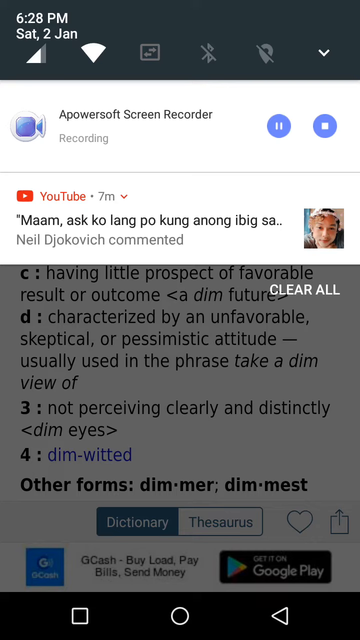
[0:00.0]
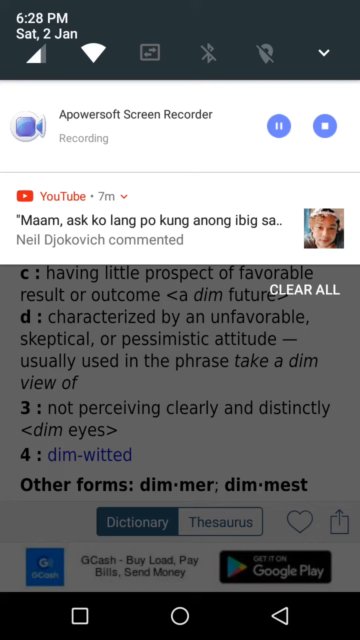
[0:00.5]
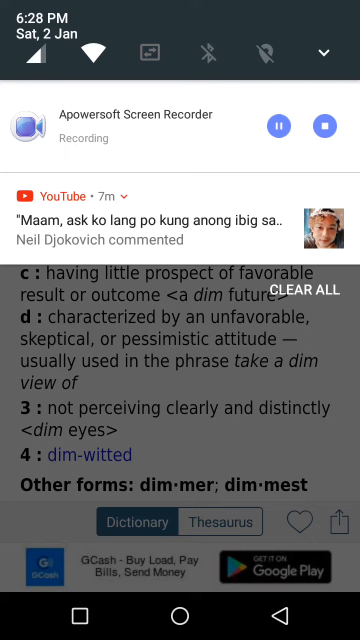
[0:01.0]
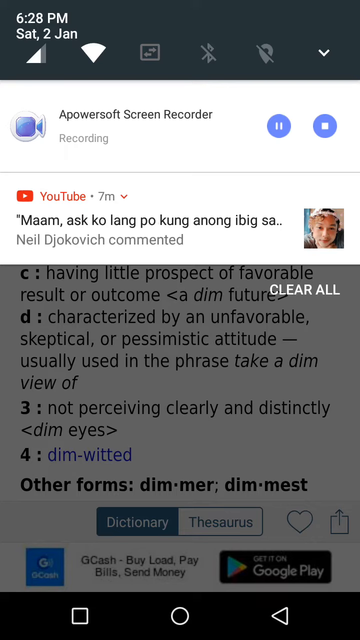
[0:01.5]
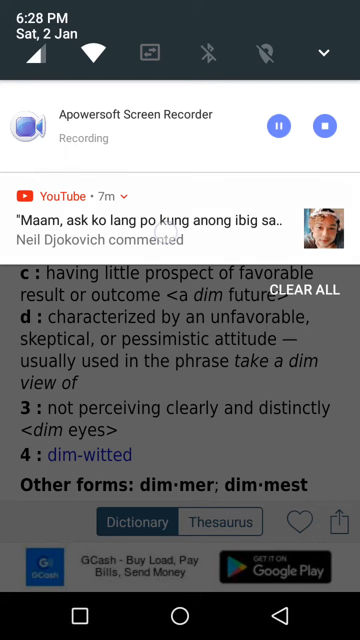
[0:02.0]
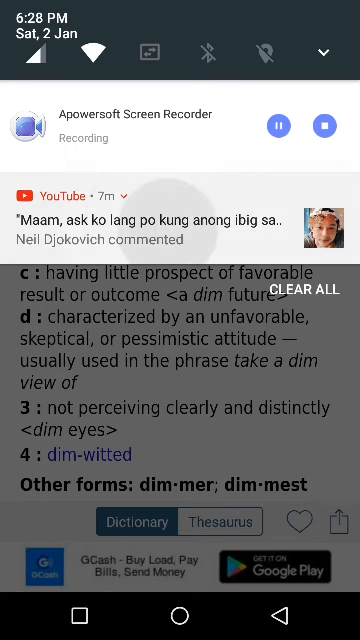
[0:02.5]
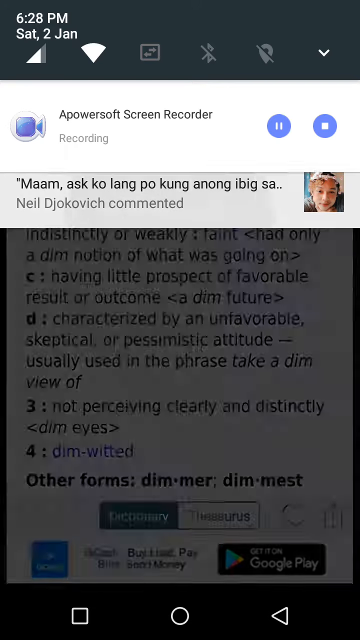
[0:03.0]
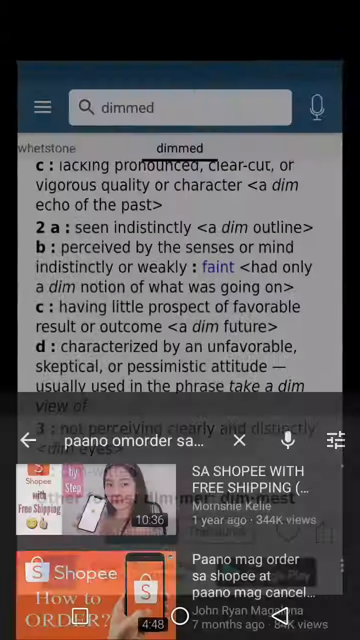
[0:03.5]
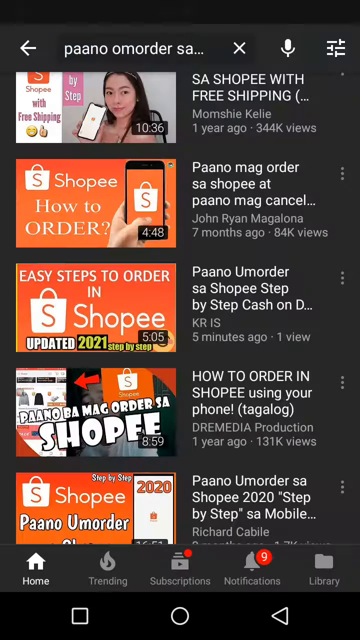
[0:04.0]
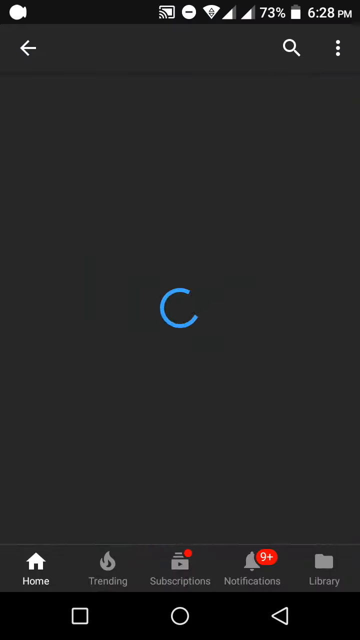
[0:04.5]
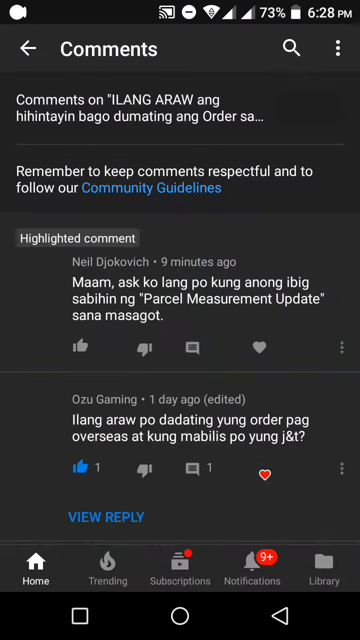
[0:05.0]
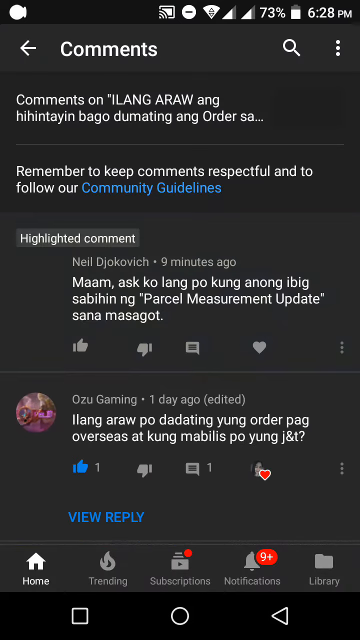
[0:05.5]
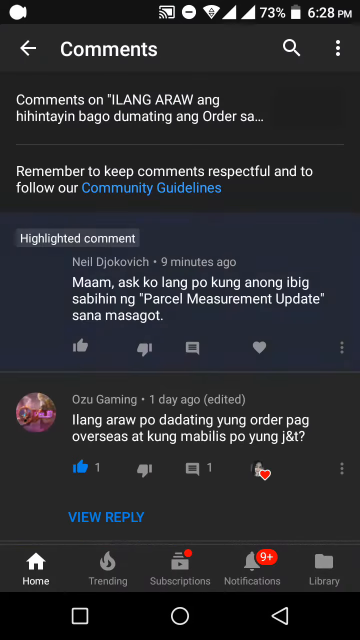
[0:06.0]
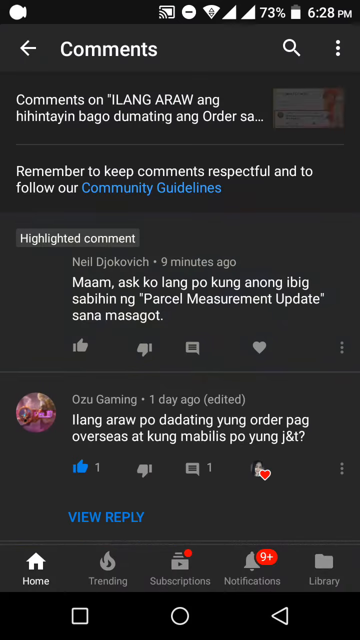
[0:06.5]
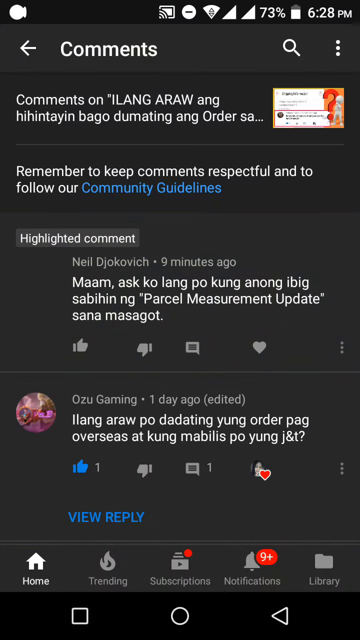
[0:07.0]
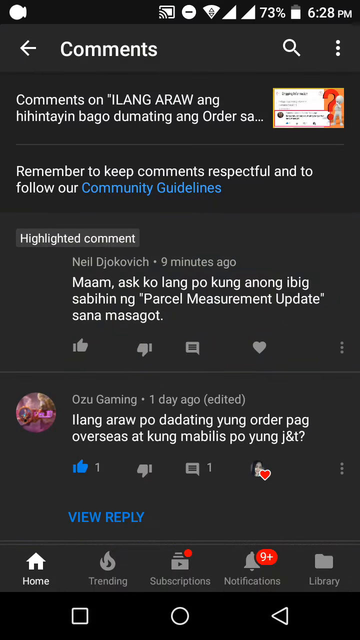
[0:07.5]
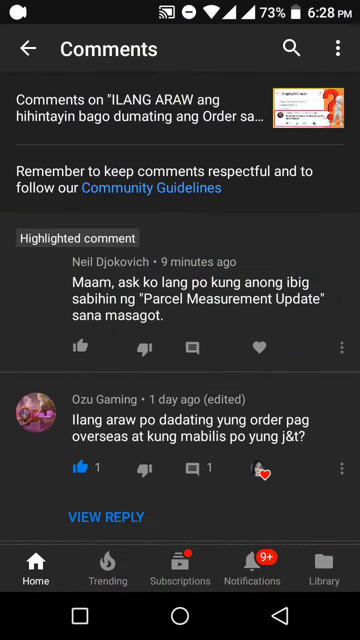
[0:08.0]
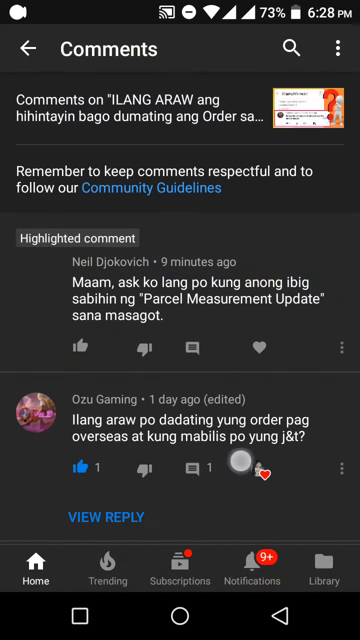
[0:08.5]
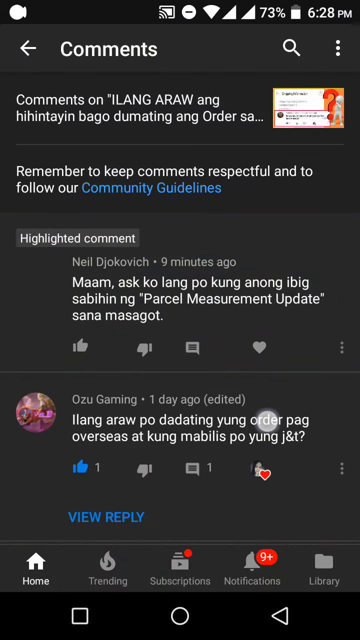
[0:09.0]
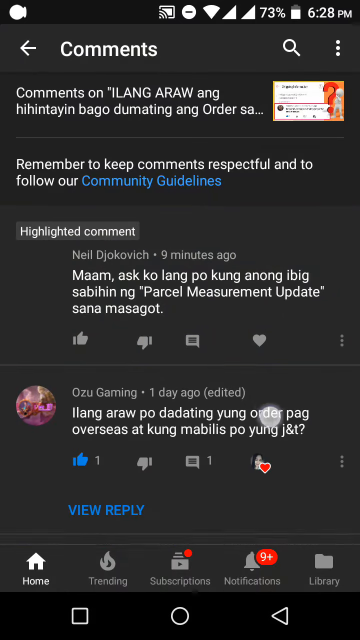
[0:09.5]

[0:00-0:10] The screen of a mobile device shows a YouTube comment posted seven minutes ago, with an avatar, a person's profile image, to the right side of the comment. The comment is in a foreign language. The screen then changes to a page with the header "comments" and a back arrow pointing to the left. The screen is dark gray and all the comments are written in white. From top to bottom, there is first a comment written in a foreign language, then an instruction in English that reads "remember to keep comments respectful and to follow our community guidelines." Below that is a highlighted comment by Neil Djokovic from nine minutes ago, written in a foreign language, and below it another comment by Ozu Gaming, also in a foreign language. Below that is "view reply." A round white tracker begins to travel in the bottom right corner of the screen.